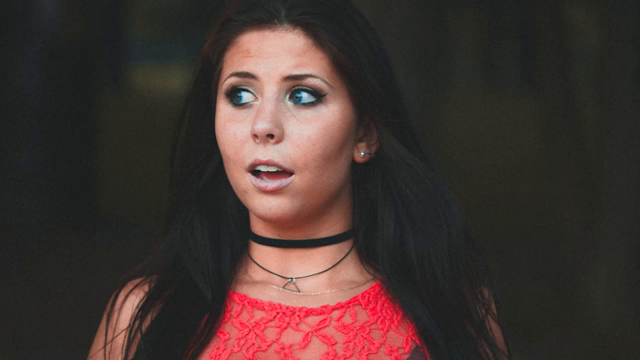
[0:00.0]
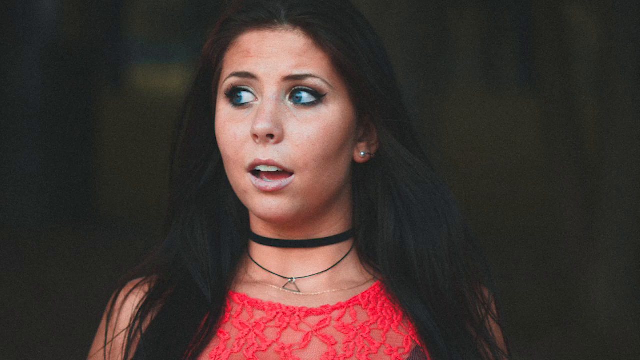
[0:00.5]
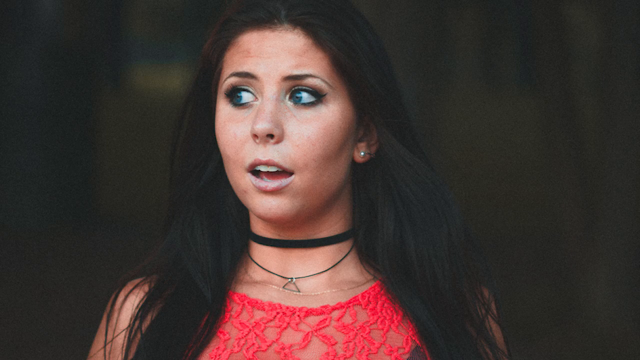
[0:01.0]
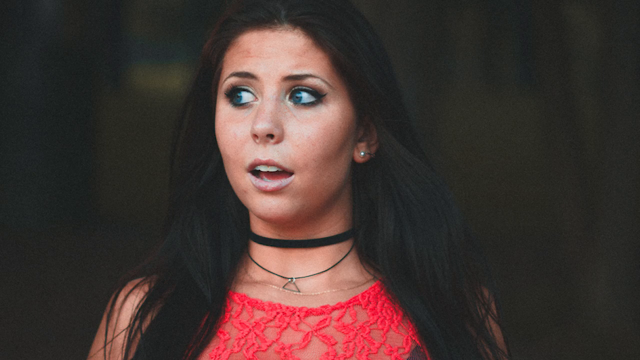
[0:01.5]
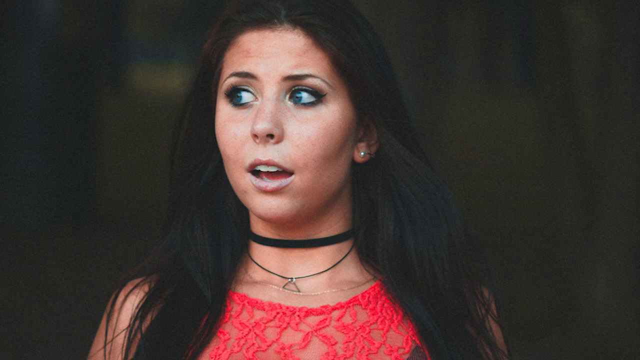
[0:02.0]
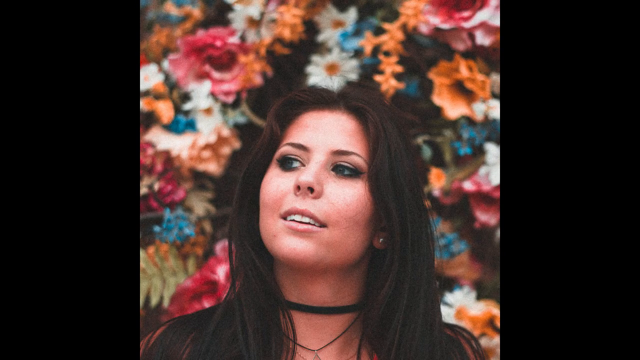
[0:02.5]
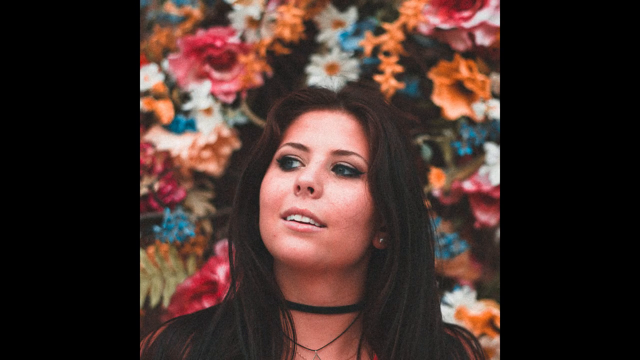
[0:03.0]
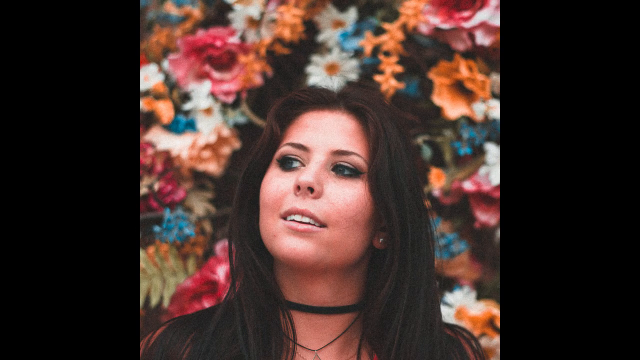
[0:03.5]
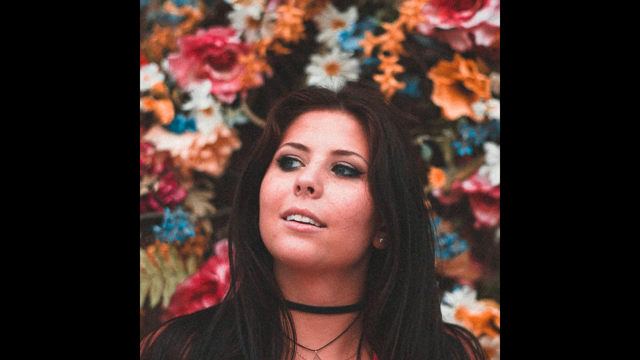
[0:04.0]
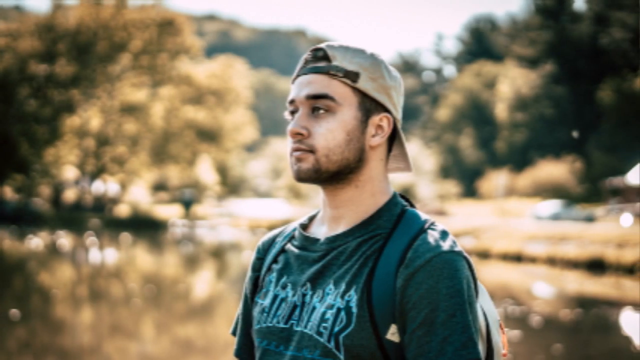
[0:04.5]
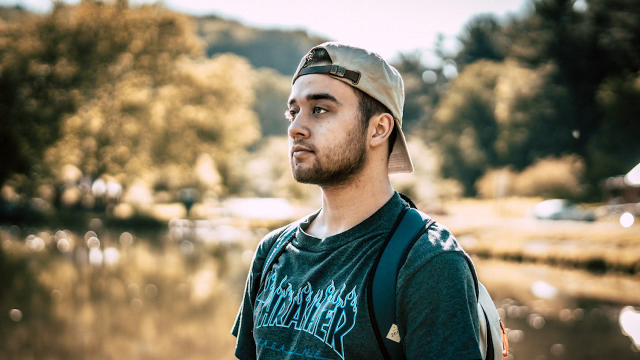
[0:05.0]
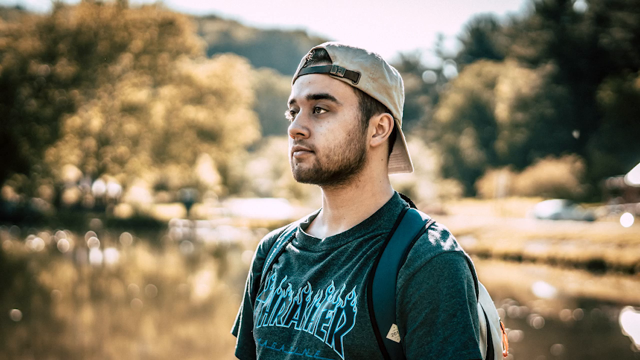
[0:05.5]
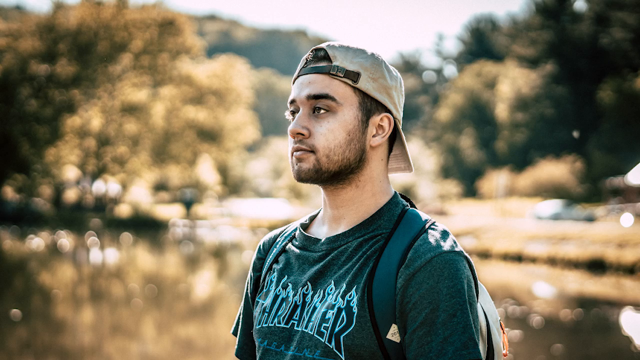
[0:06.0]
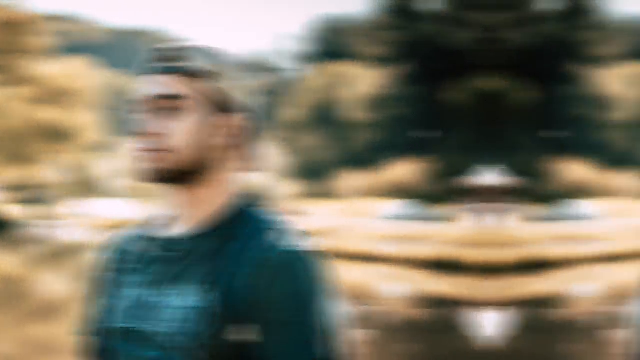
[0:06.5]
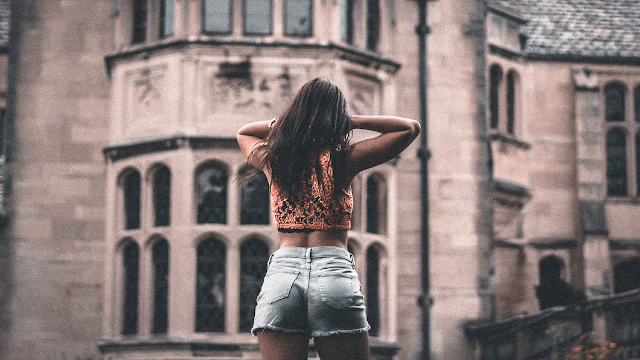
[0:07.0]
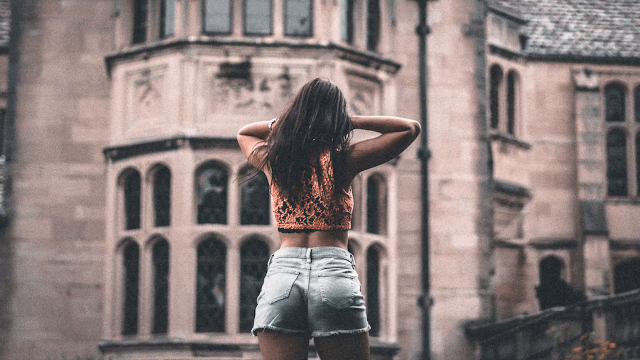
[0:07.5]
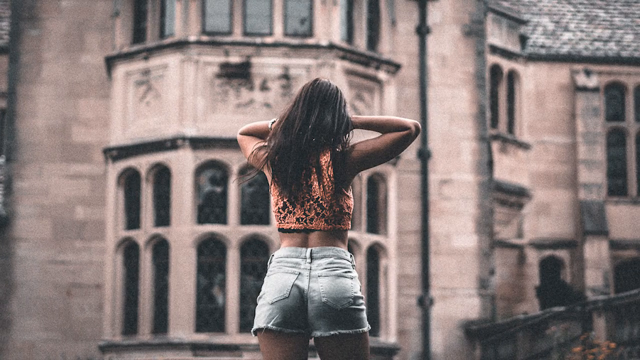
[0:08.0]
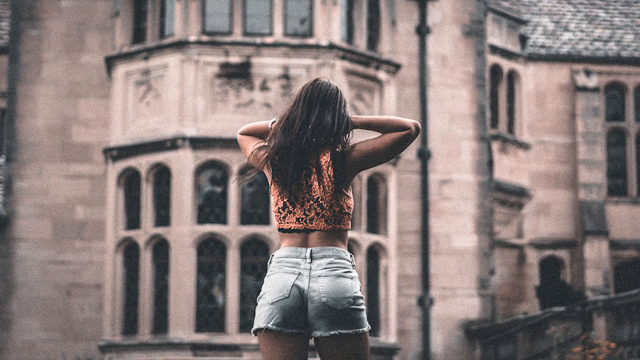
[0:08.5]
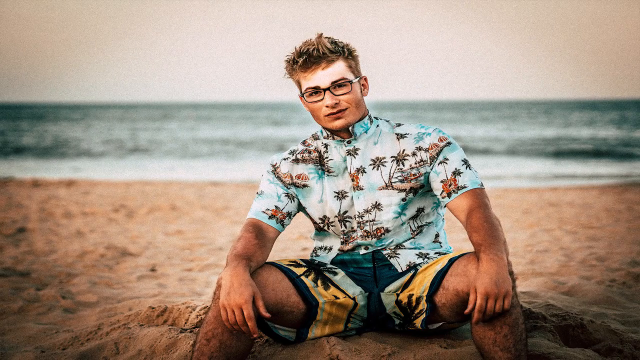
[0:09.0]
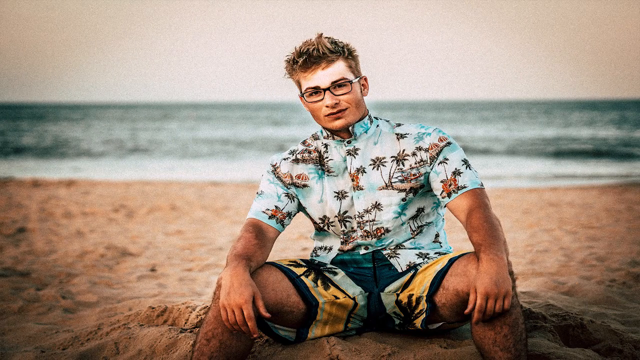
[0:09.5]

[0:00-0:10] The video opens with a photo of a woman, then moves to another woman, a man, another woman, and another man. Some of the images are real, while others look like hyper-realistic or edited photos. The people wear different clothing and are in different locations. A transition effect makes the photos change from one to the next.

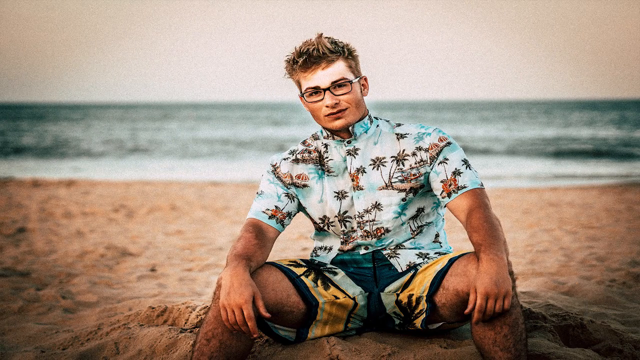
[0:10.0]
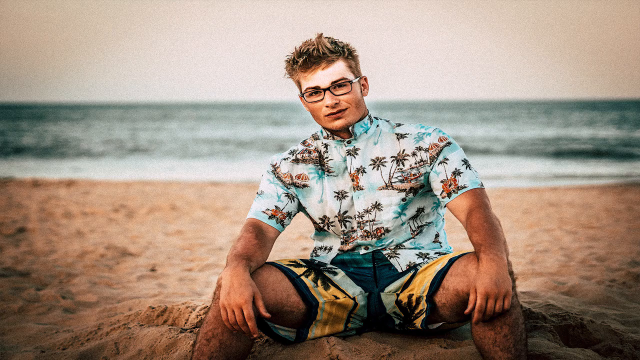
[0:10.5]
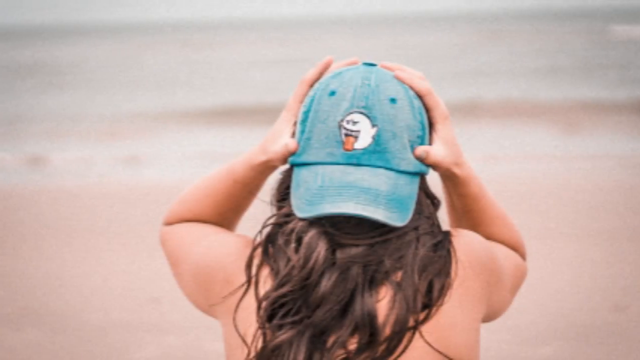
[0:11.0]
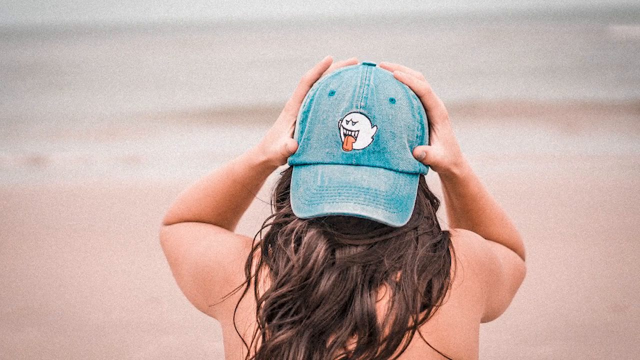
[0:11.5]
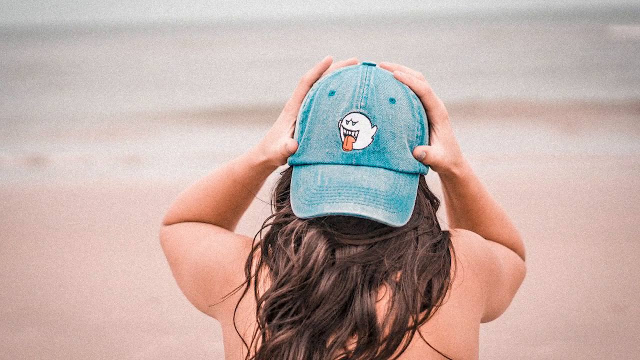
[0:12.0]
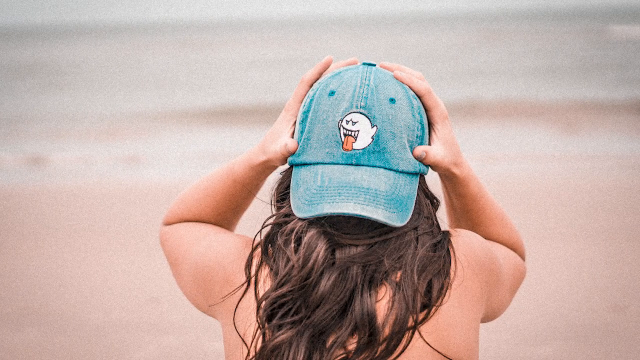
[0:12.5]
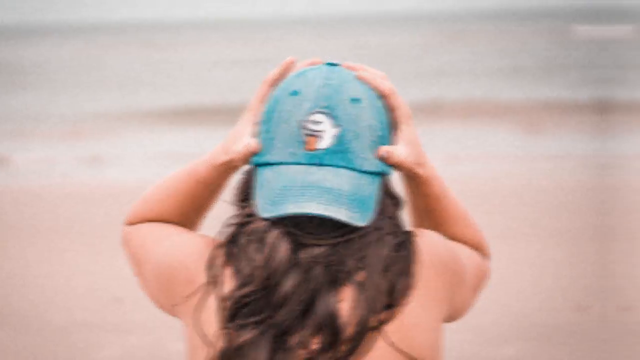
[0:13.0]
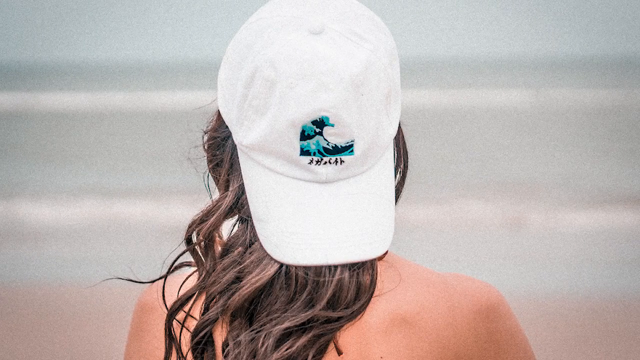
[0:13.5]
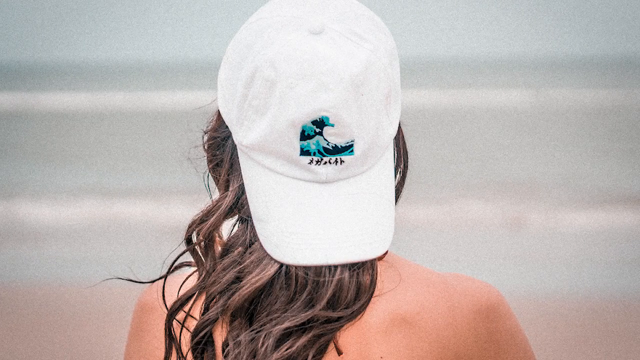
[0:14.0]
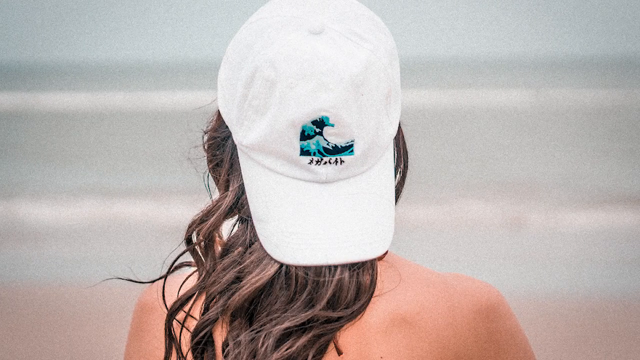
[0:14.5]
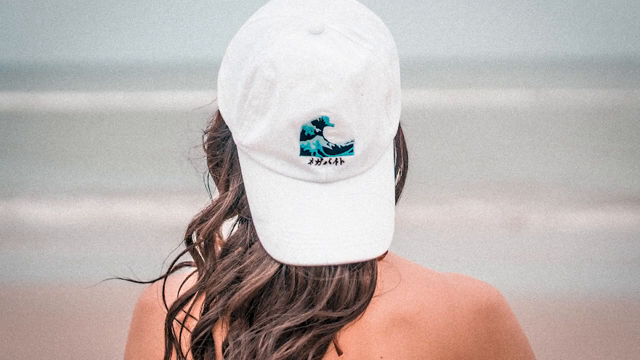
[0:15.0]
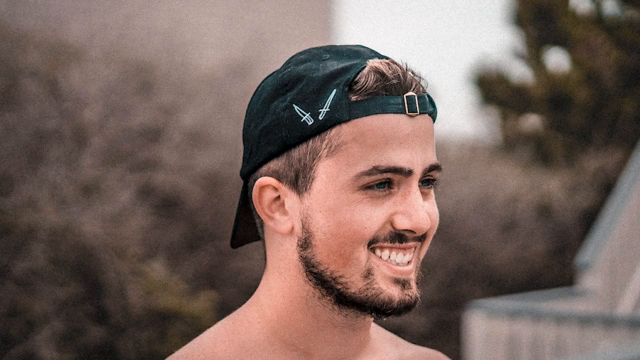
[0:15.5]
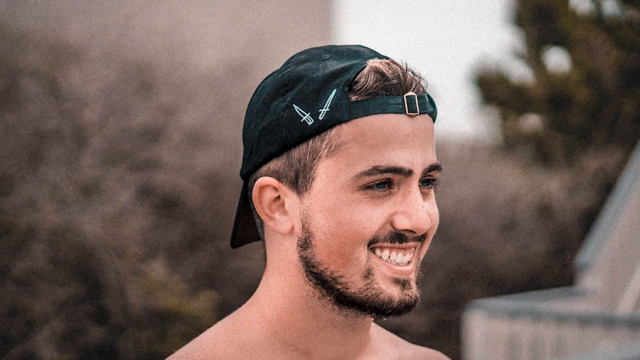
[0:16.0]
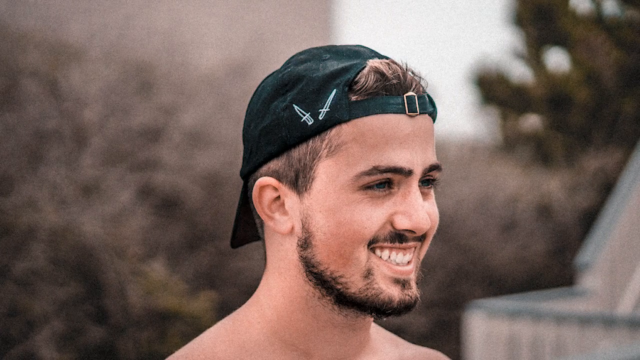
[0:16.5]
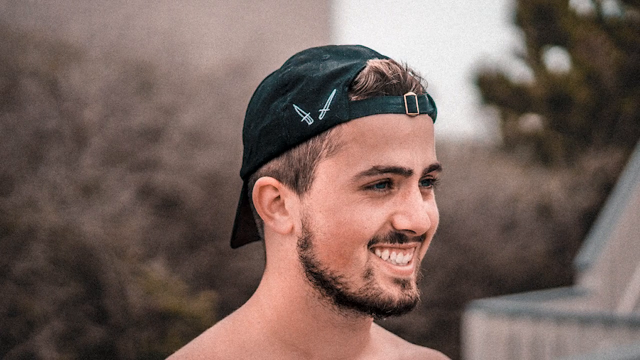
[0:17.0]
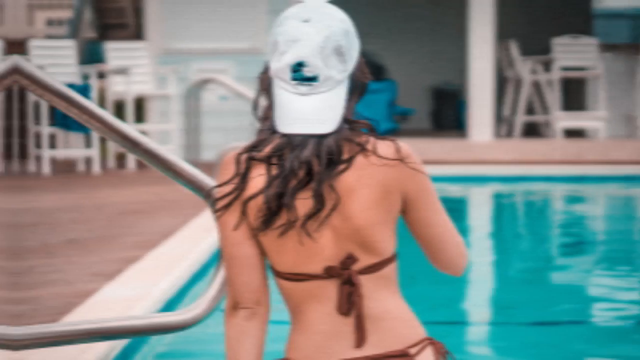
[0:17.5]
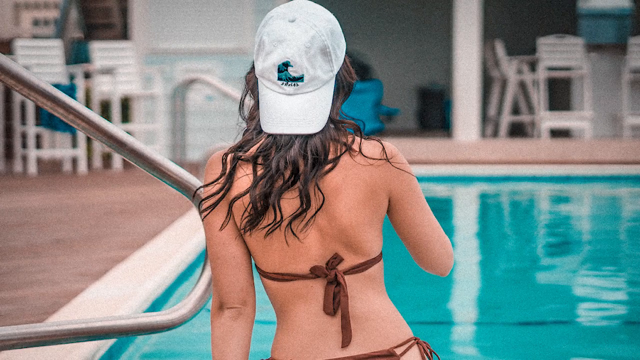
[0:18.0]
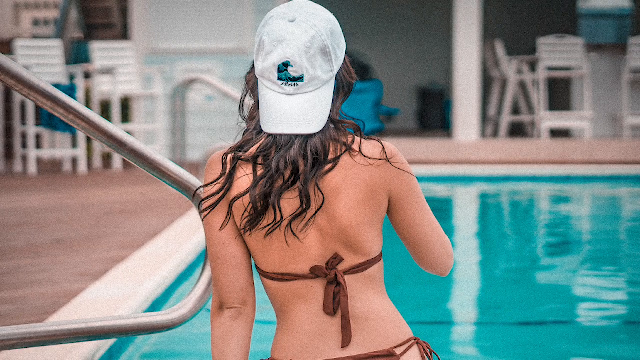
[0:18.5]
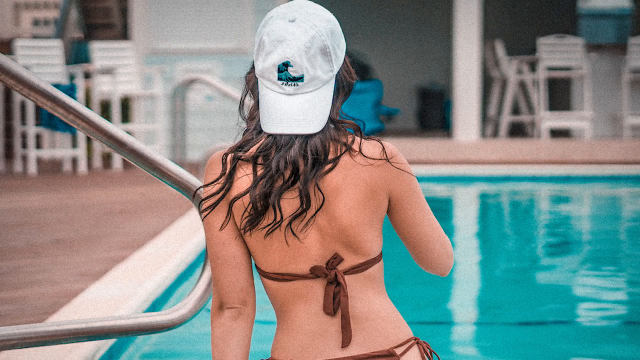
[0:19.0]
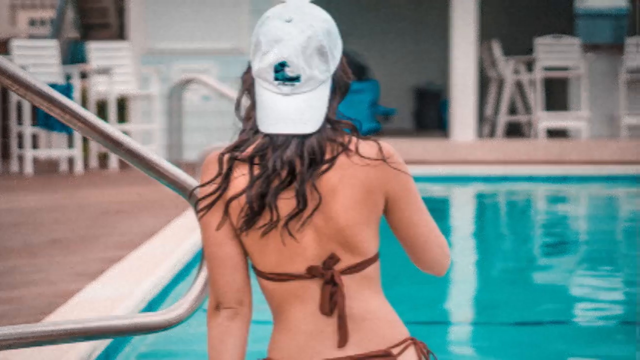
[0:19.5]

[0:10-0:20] Images of men and women appear, each in a different location. A transition effect makes the photos change from right to left. Further images show women, some in swimming costumes and others in the ocean. Some people wear white caps, and another wears a black one. Each person is shown in a different location.